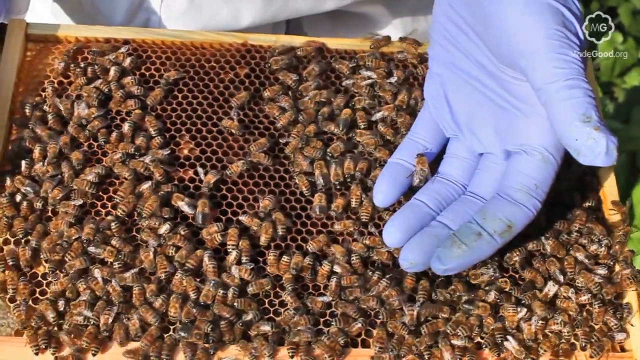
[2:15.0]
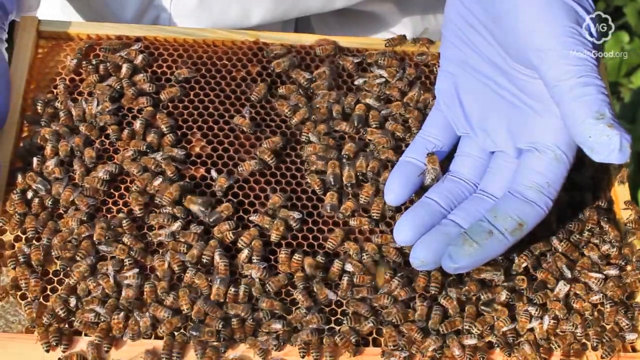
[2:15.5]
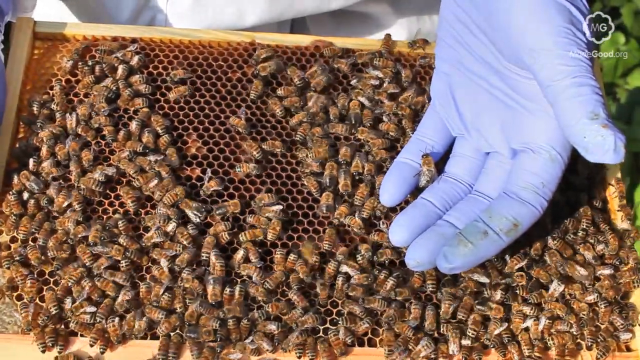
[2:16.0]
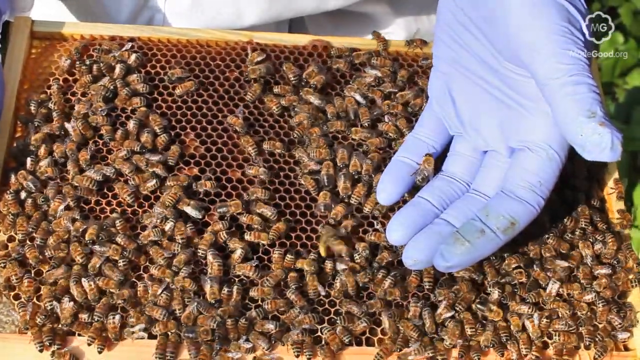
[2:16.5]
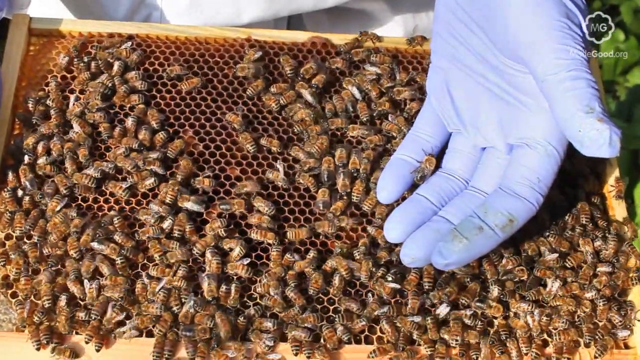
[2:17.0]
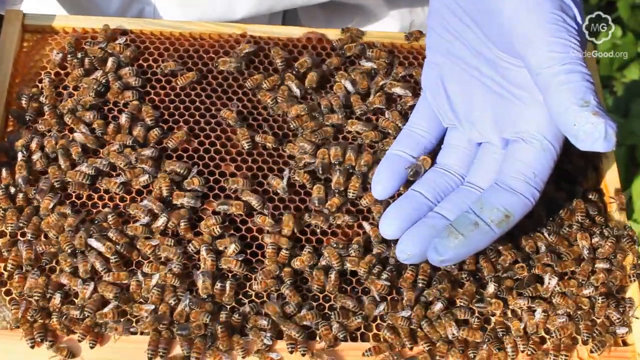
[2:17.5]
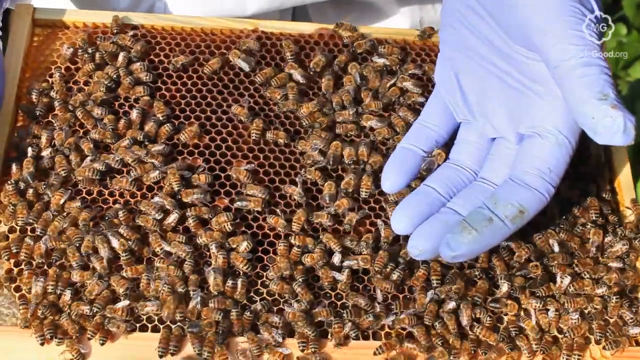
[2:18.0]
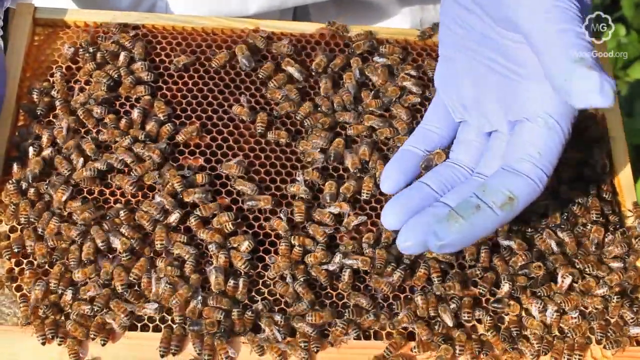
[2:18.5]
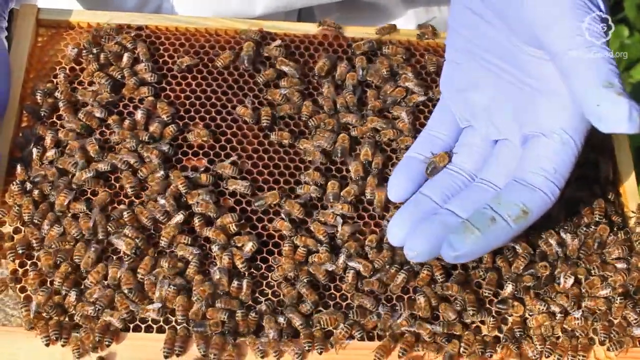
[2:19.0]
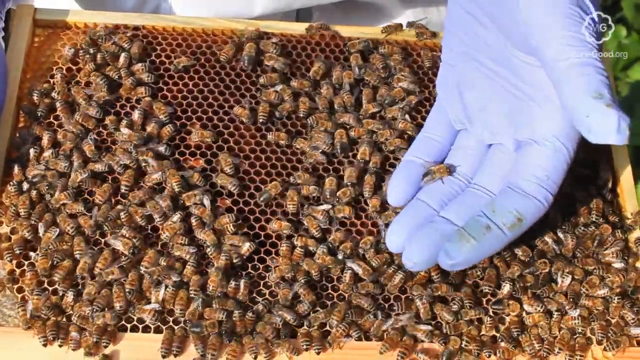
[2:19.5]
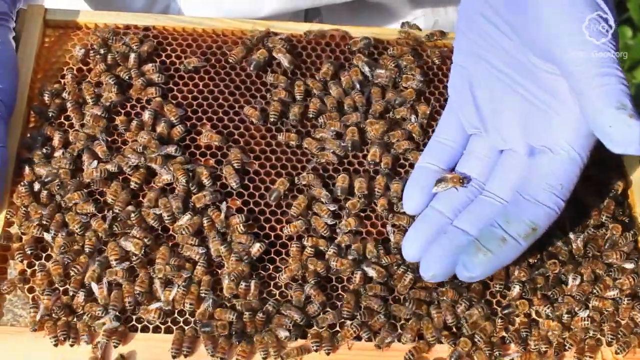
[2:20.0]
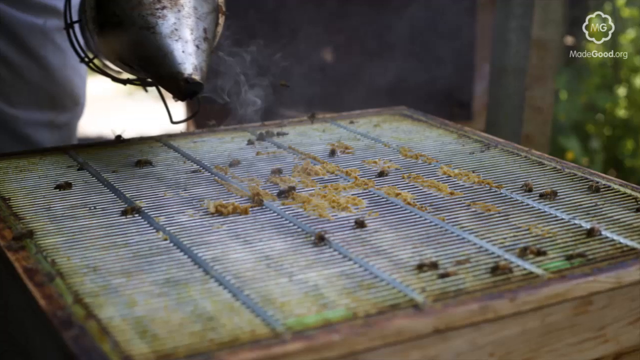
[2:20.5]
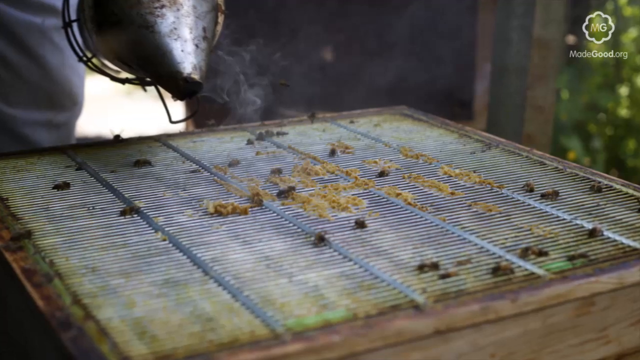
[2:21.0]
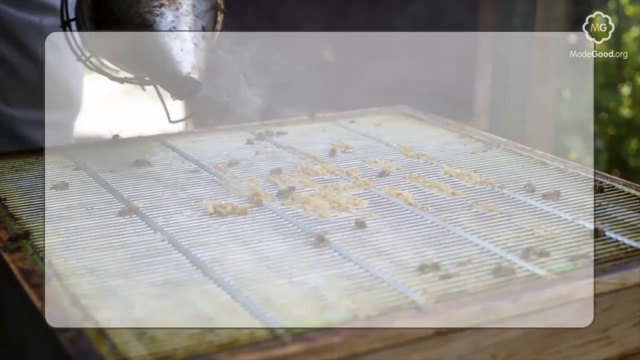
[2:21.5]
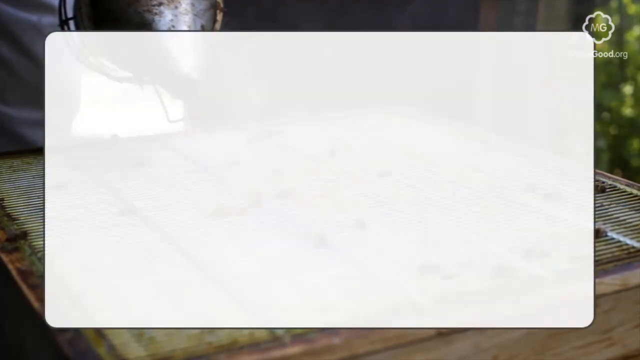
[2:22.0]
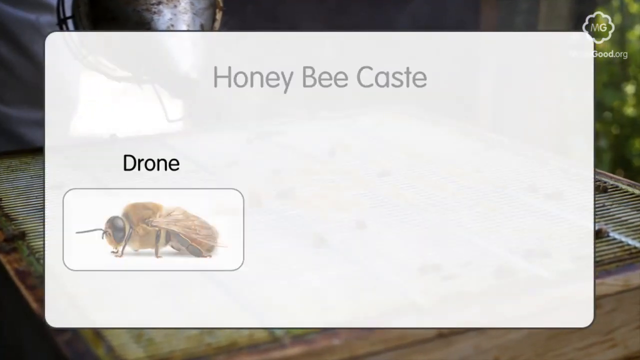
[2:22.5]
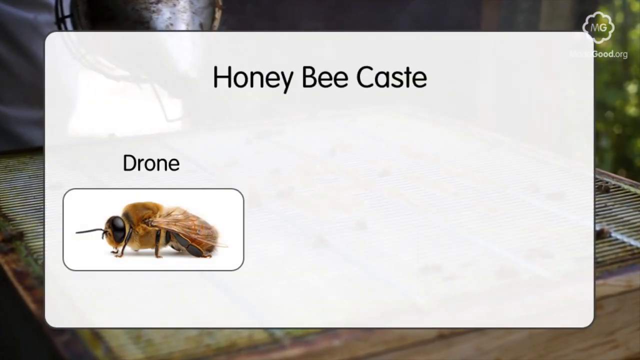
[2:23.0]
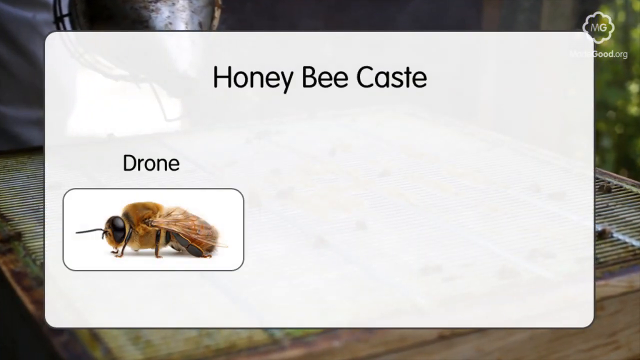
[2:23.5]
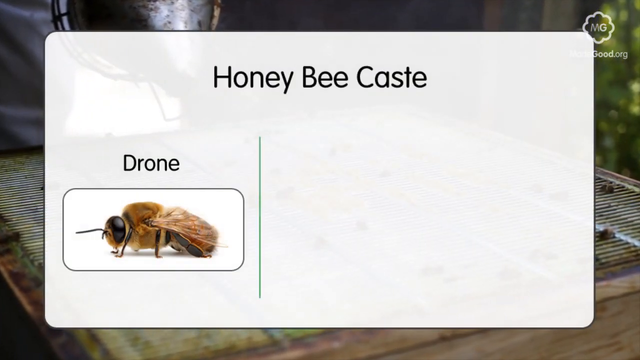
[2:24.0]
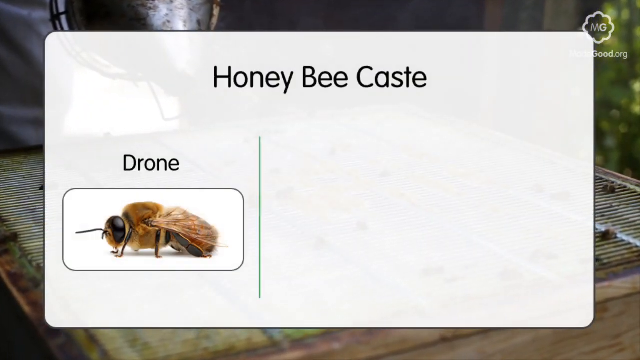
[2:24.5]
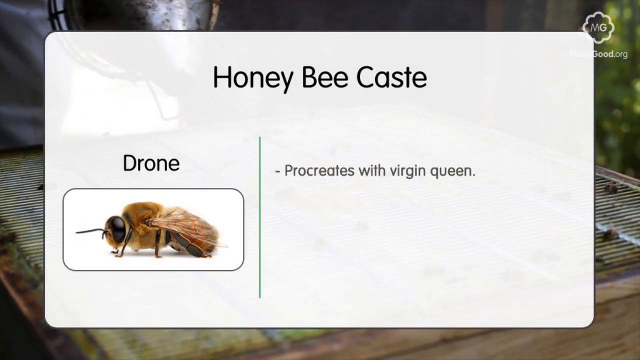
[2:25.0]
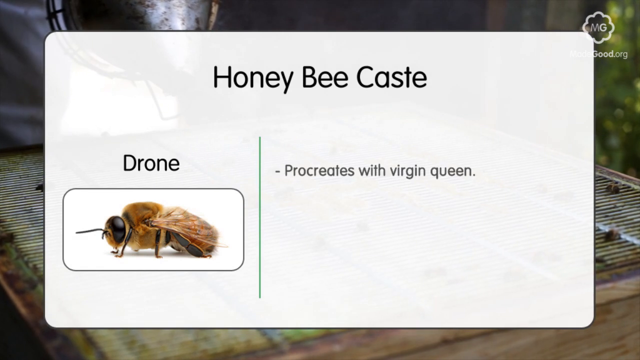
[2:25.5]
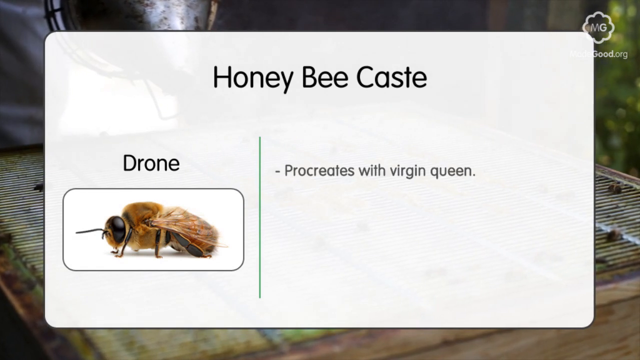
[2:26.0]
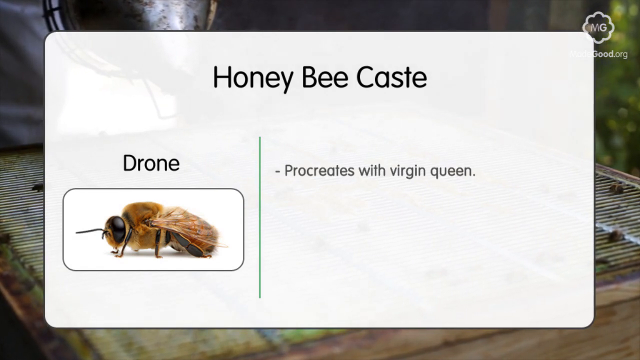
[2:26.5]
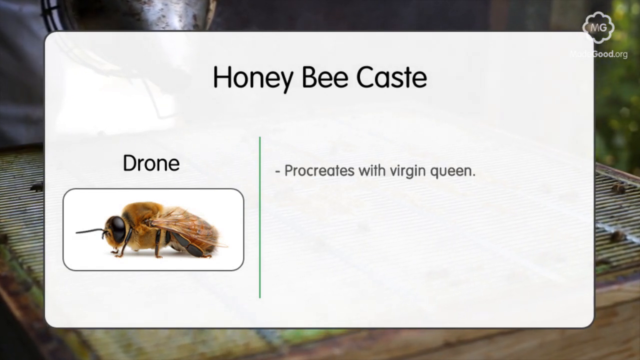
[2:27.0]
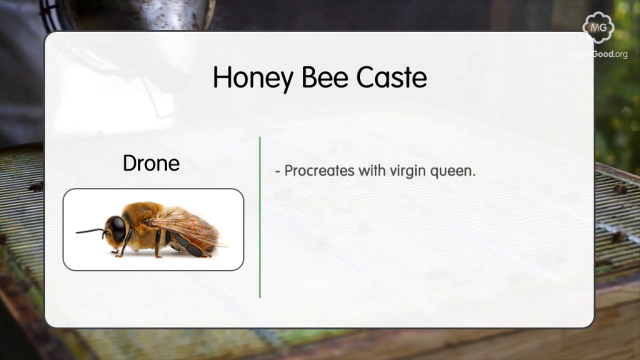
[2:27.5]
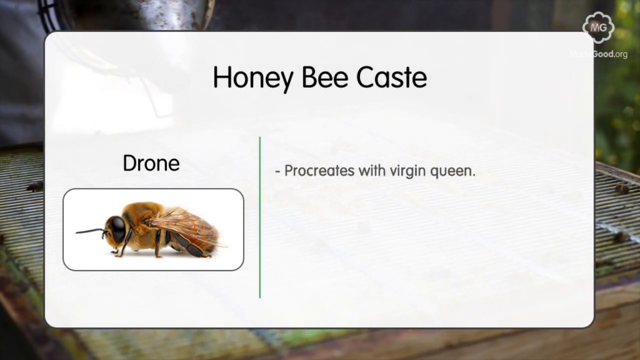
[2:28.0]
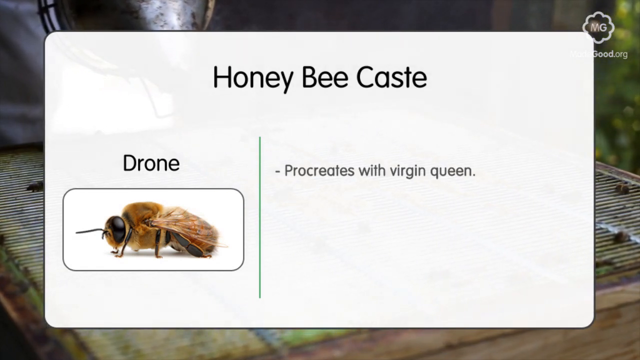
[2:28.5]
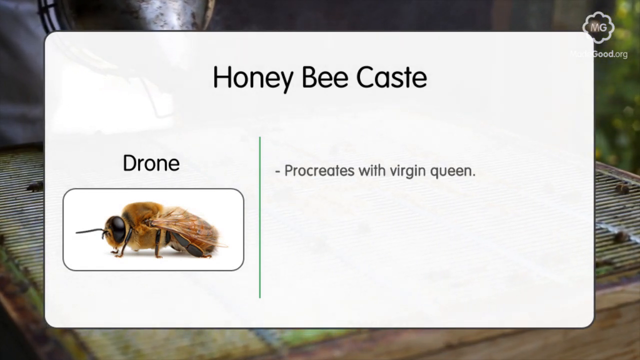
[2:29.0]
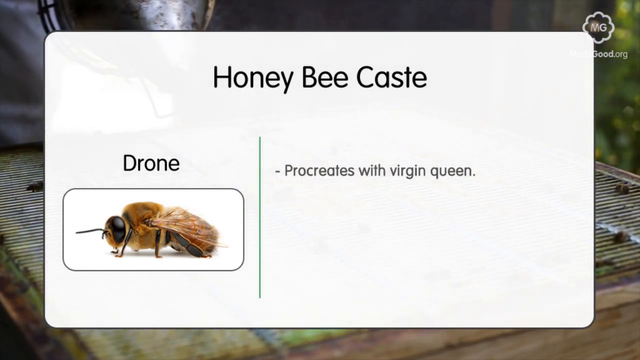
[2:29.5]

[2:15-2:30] Bees swarm and crawl around on a wooden center box, probably around 30 in total. The video then changes to an infographic with a background related to bees. It reads "Honey Bee Caste" and features the drone bee, which is brown with a black head and a variety of wings, and says that it "procreates with the queen". This is on a white background, with some nature shown in the image below it, but the main focus is the drone bee and its attributes.